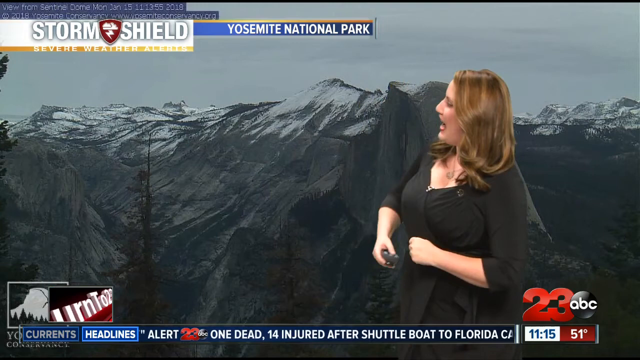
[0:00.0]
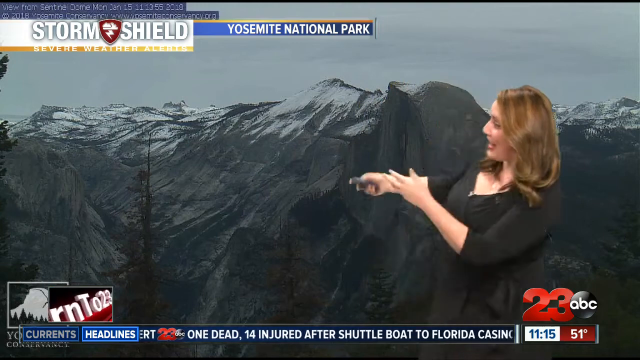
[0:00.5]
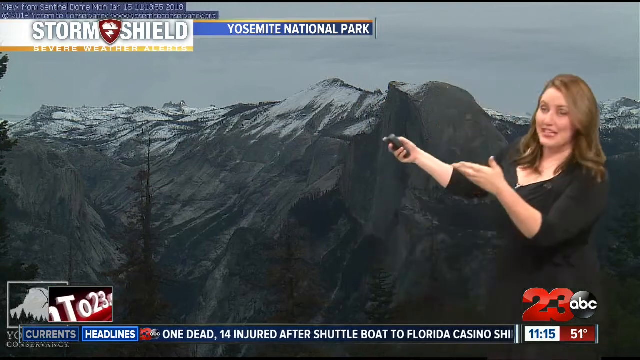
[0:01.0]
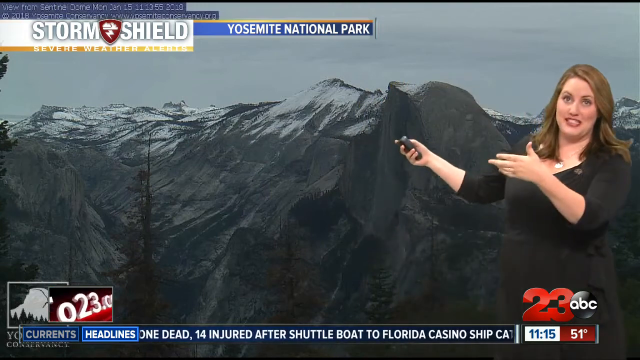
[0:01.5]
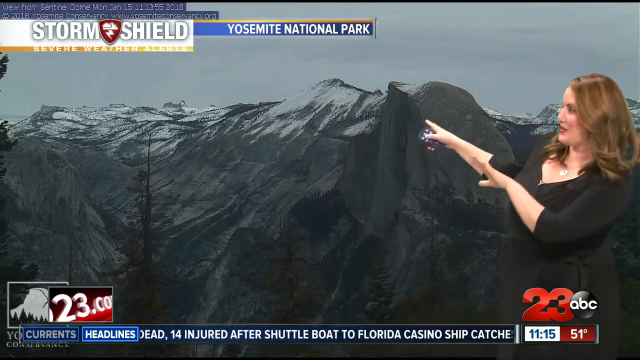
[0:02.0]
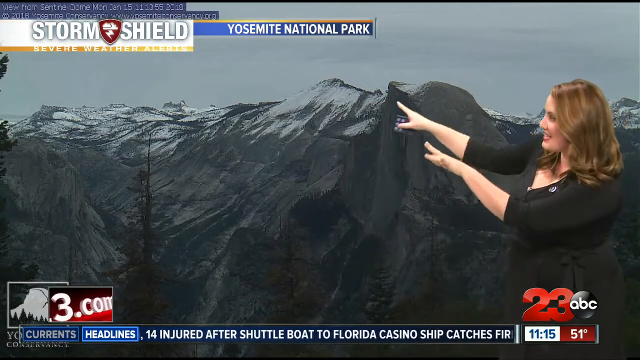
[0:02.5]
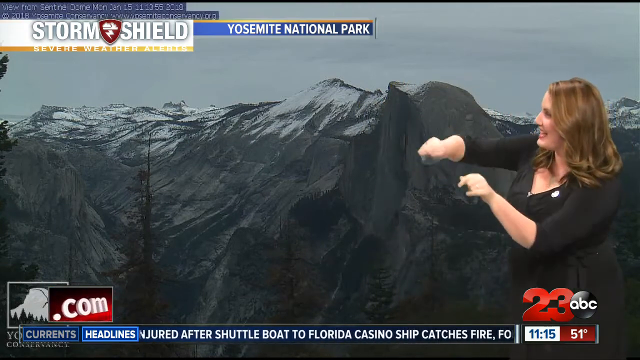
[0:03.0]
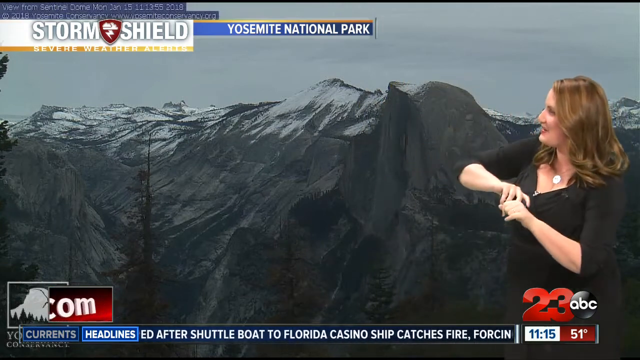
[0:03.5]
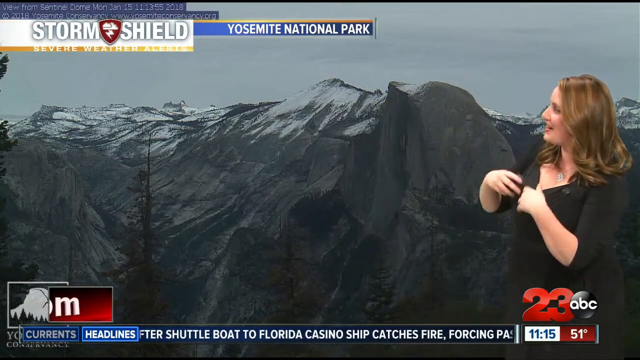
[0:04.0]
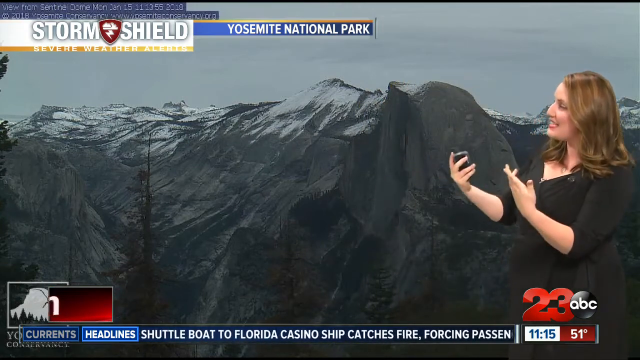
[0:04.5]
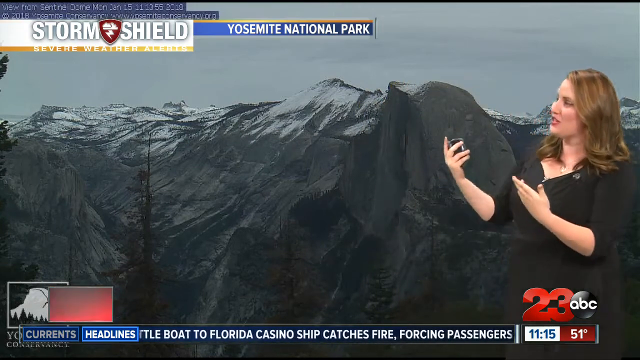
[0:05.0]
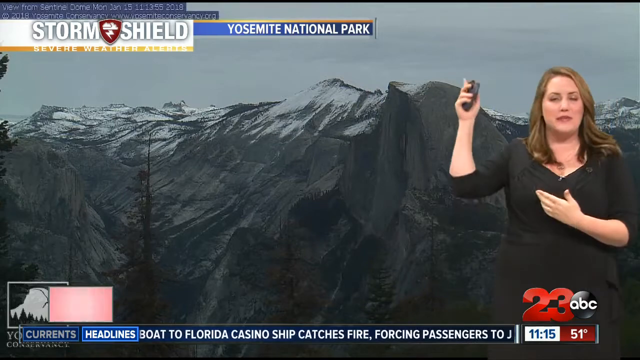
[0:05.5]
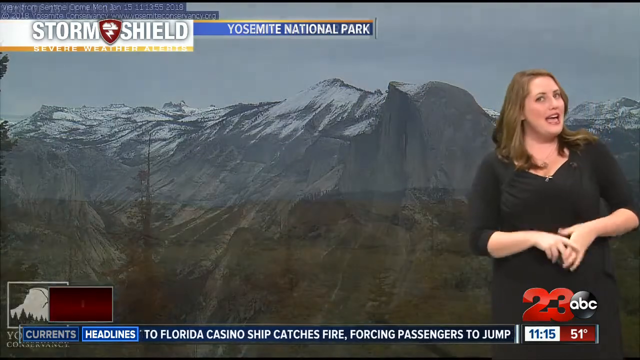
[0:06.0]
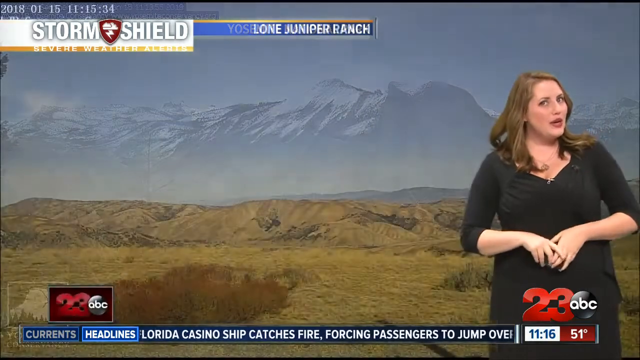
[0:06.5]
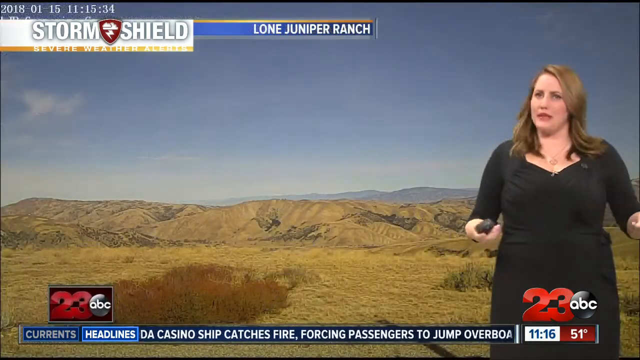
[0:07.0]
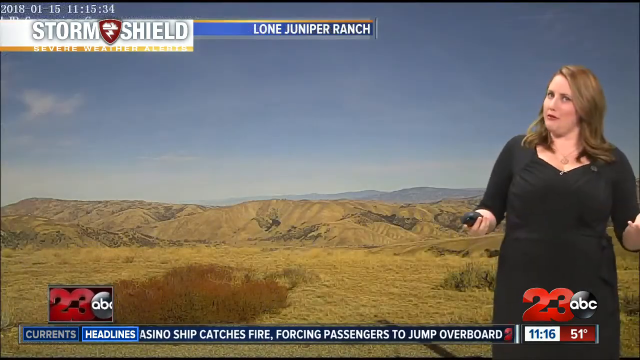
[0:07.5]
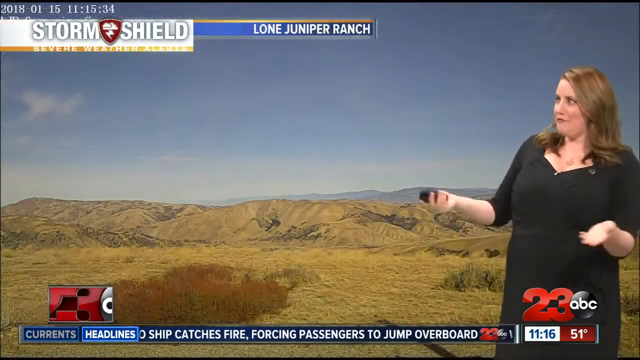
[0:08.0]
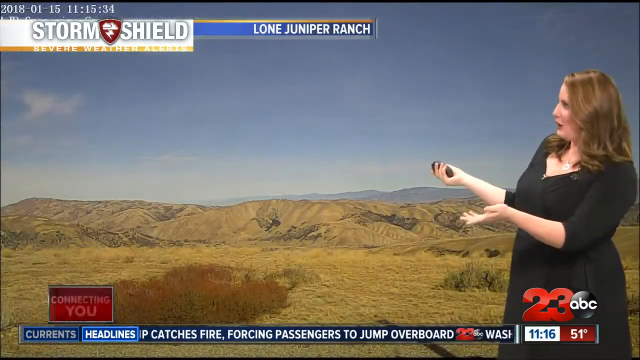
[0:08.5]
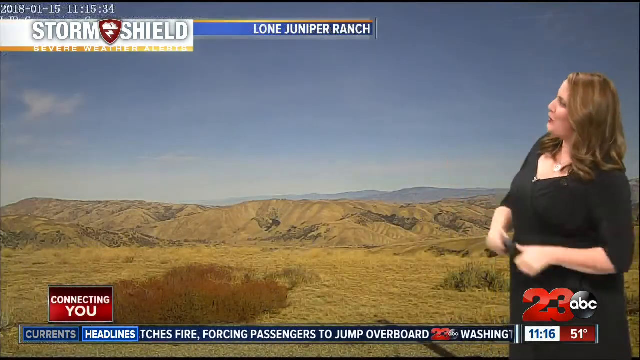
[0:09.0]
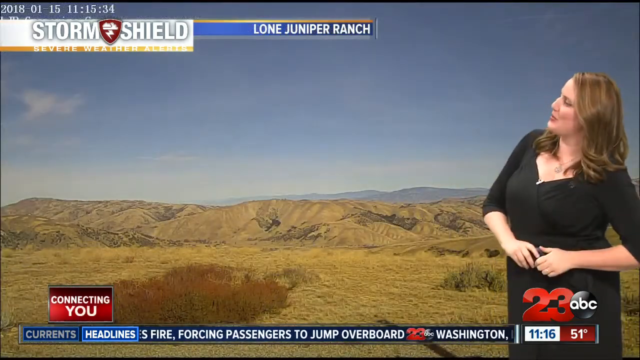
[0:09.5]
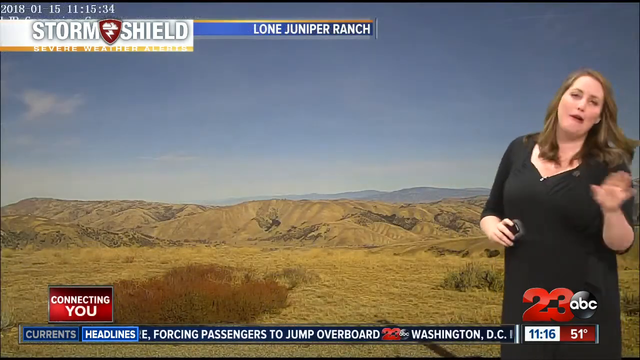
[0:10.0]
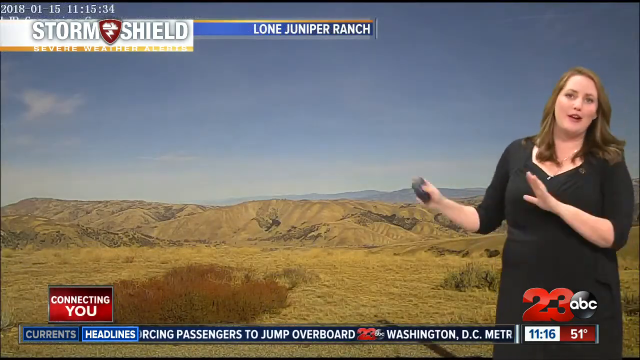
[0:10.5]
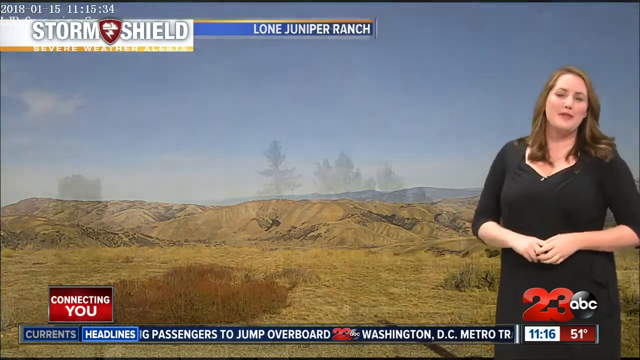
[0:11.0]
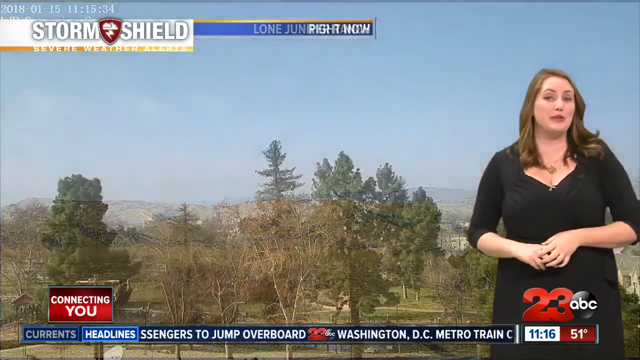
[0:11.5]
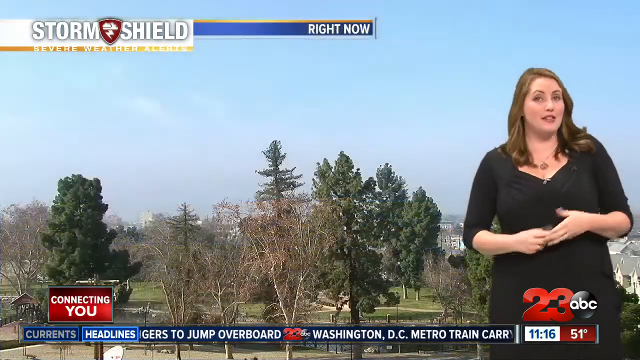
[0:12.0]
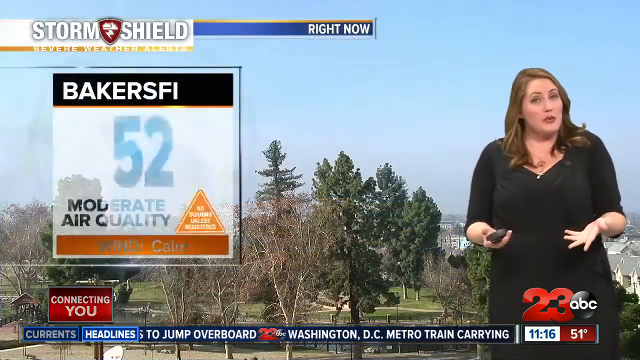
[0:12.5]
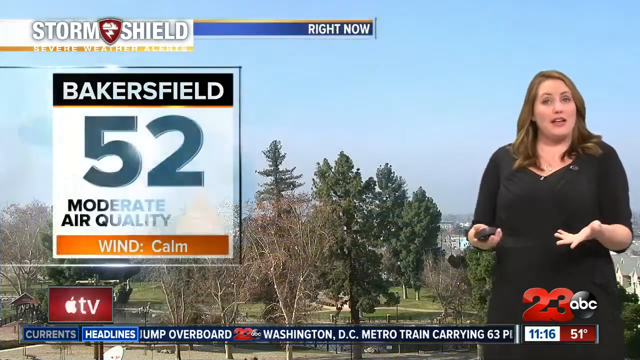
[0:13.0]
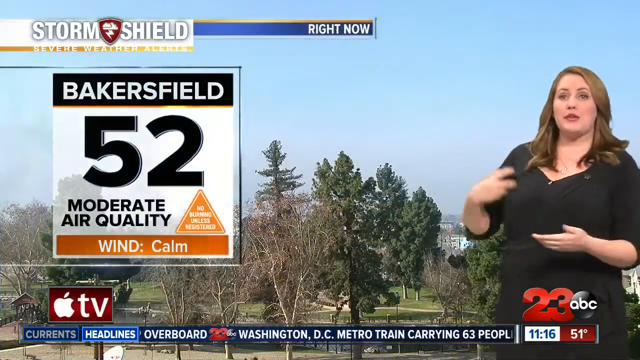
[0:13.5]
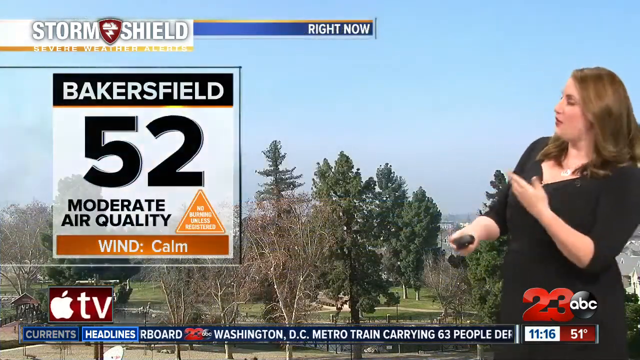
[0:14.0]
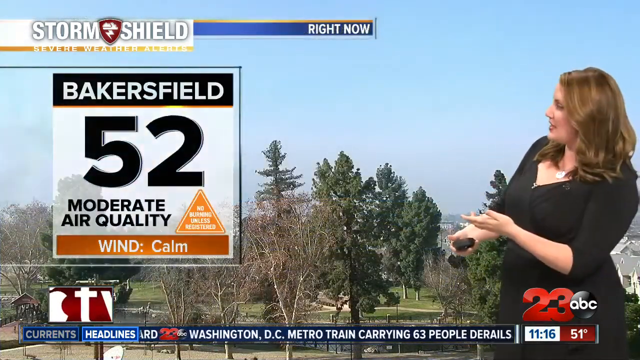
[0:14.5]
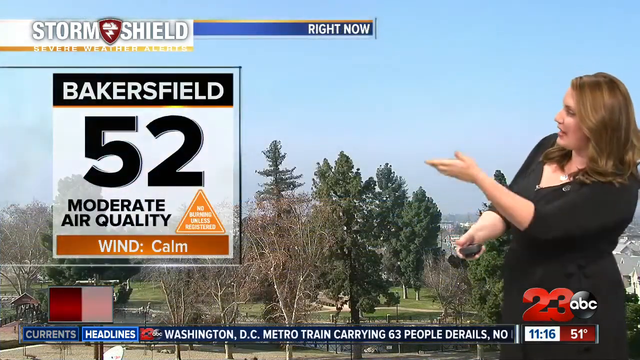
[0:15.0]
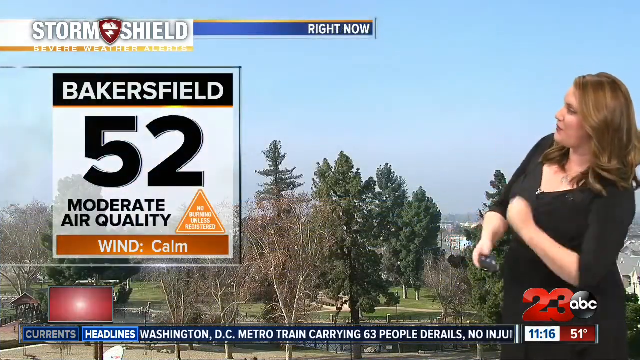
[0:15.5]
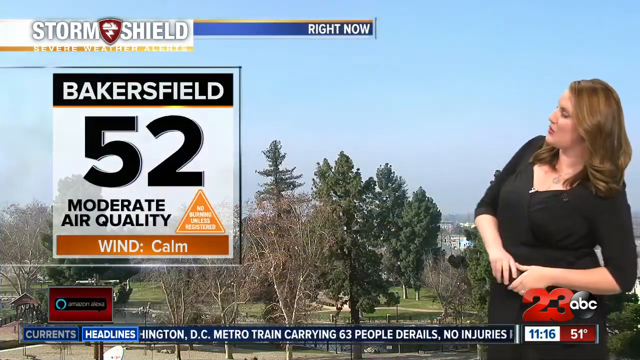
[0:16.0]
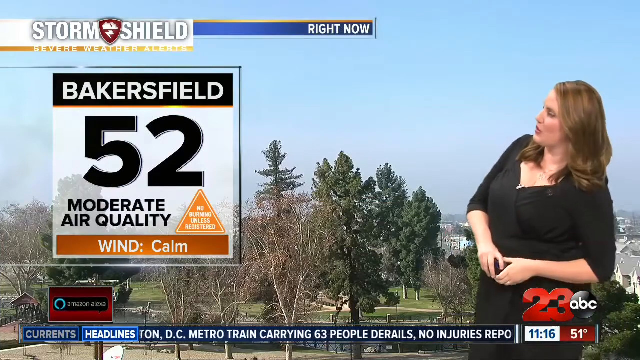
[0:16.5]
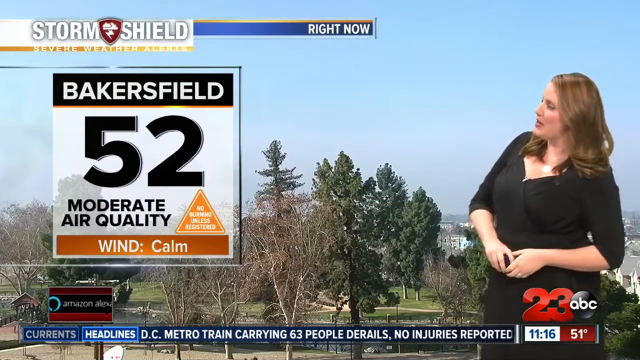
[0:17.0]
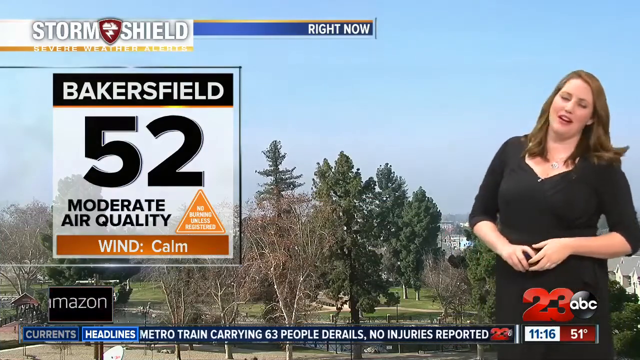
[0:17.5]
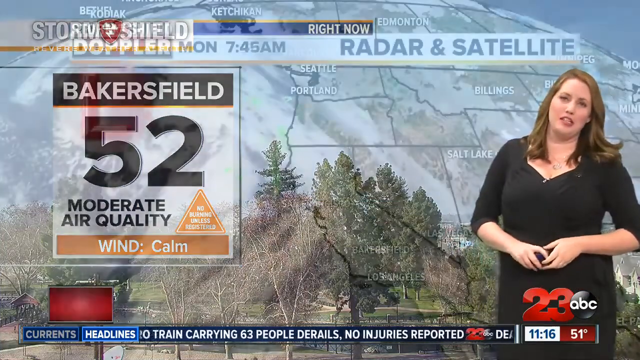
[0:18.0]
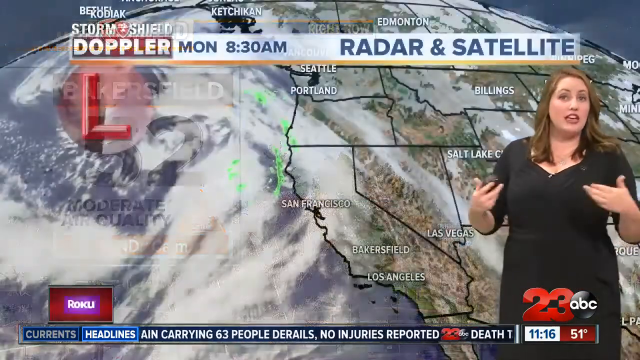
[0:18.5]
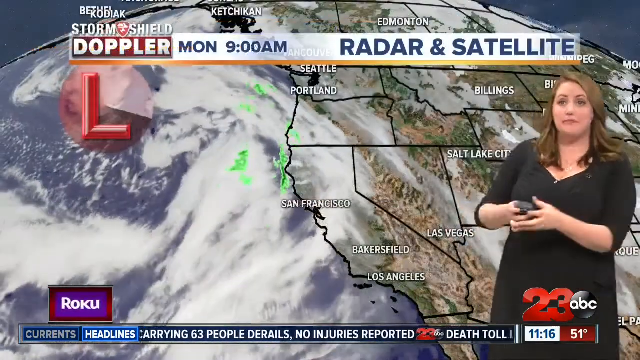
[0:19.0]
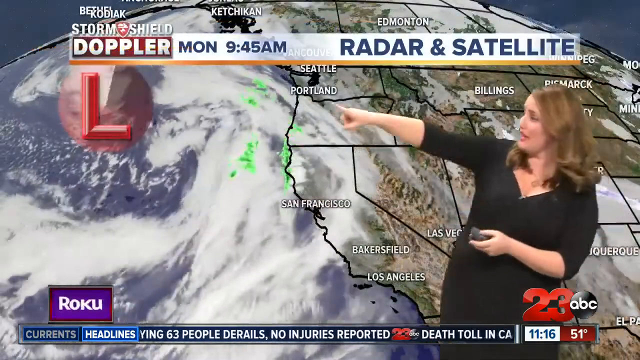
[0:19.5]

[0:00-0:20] An ABC News Channel 23 Storm Shield Severe Weather Alert for Yosemite National Park opens with a picture of Yosemite in which Half Dome is visible and there is some snow up on the mountains. A woman with light brown hair points toward a blue or green screen, holding a remote in her hand to change the slides. The slide changes to a drier, desert-like environment labeled "Lone Jumper Ranch," and then a little box pops up to the left reading "right now in Bakersfield 52, moderate air quality and calm wind." Next a map of the west coast appears, and she points to what seems to be a low pressure system over the ocean, with clouds coming around it. The screen reads "Monday 10 30 a.m. Radar and Satellite Storm Shield Doppler."